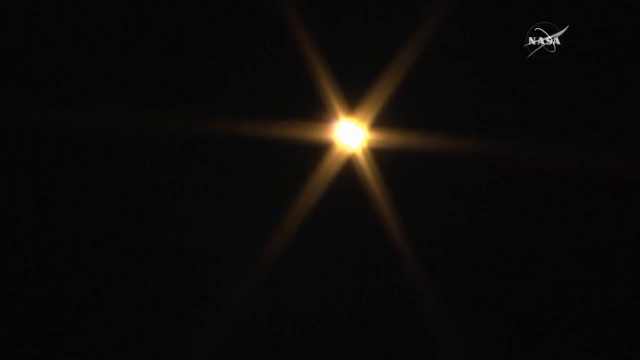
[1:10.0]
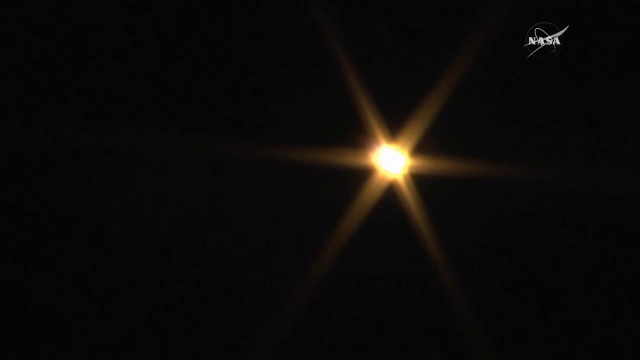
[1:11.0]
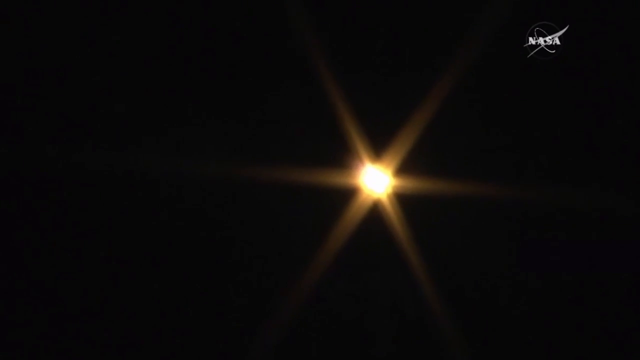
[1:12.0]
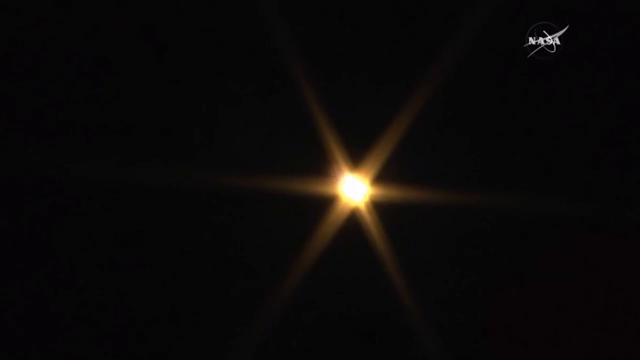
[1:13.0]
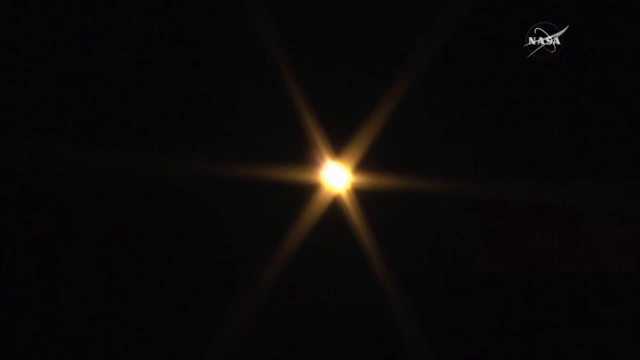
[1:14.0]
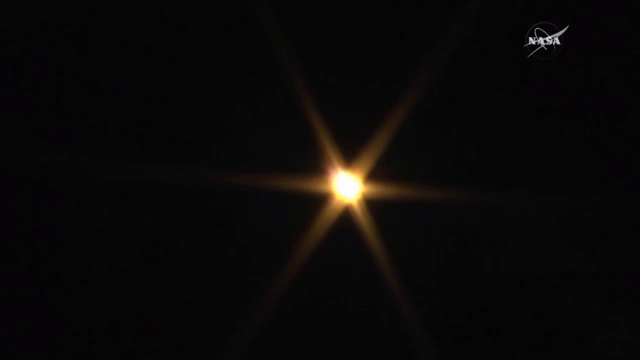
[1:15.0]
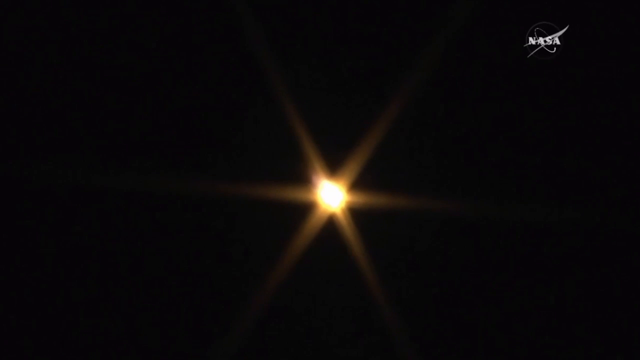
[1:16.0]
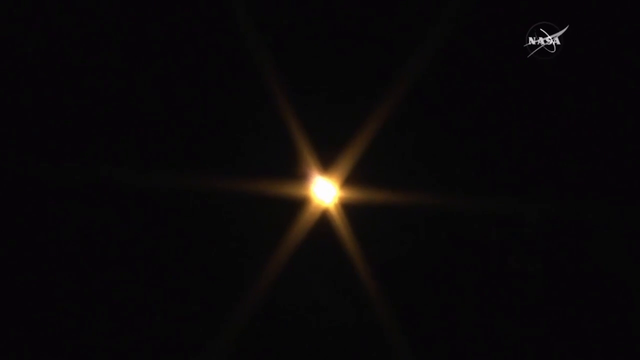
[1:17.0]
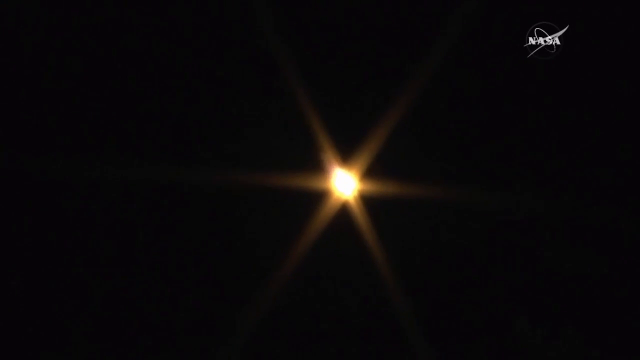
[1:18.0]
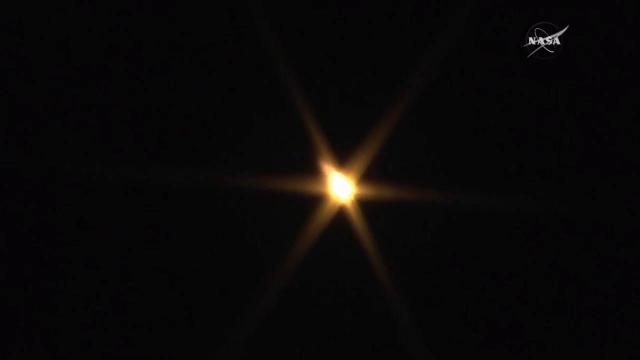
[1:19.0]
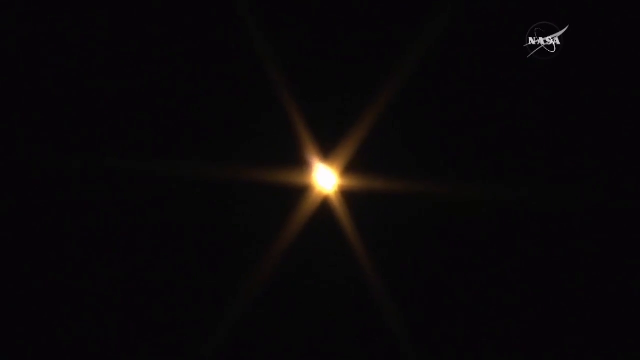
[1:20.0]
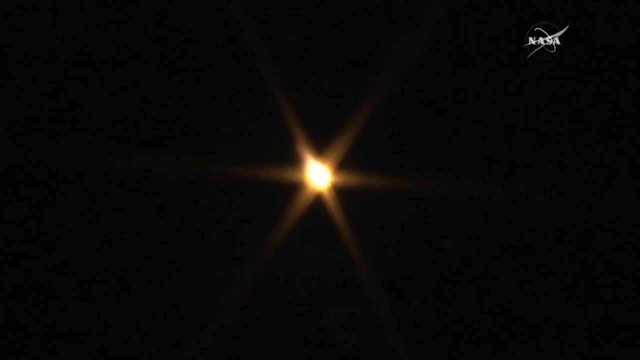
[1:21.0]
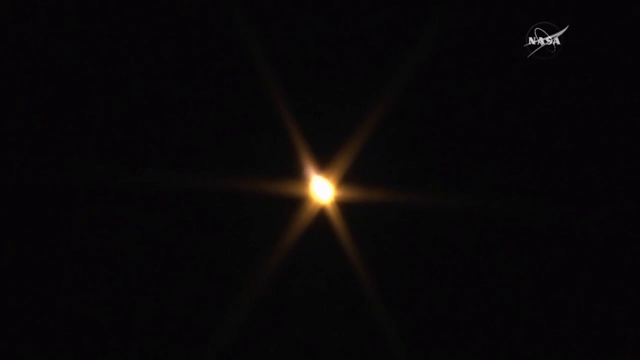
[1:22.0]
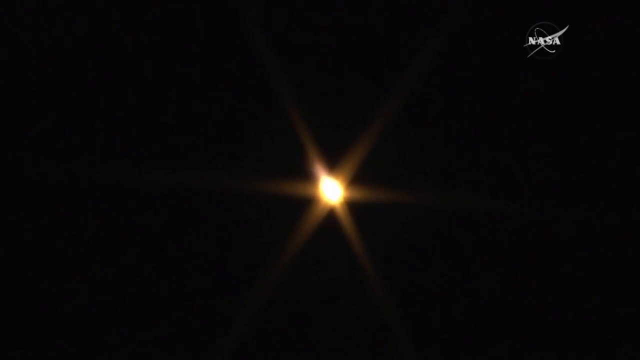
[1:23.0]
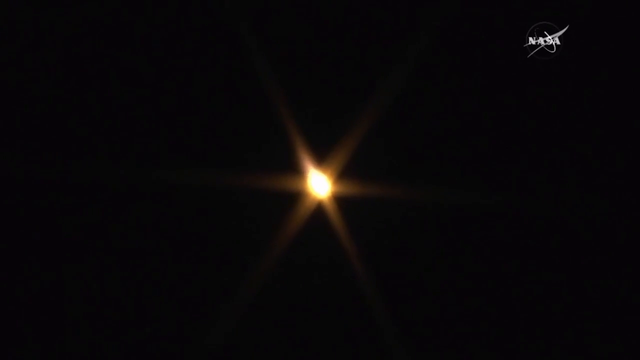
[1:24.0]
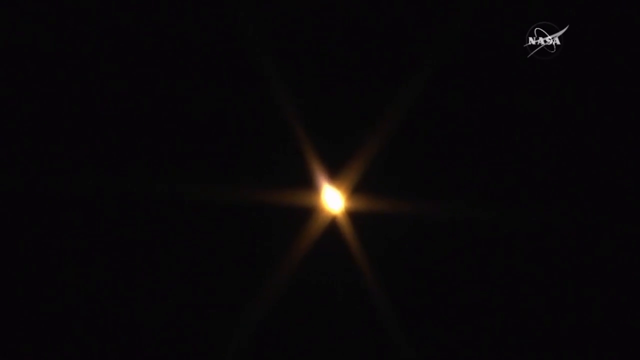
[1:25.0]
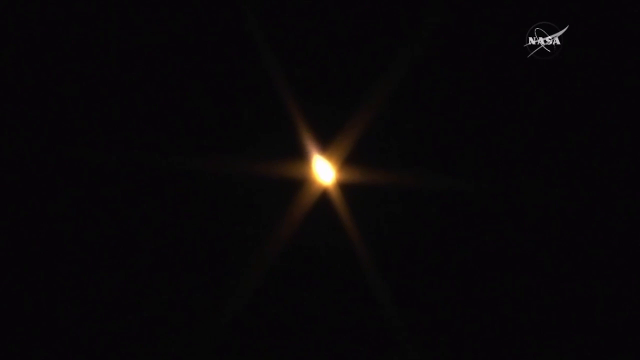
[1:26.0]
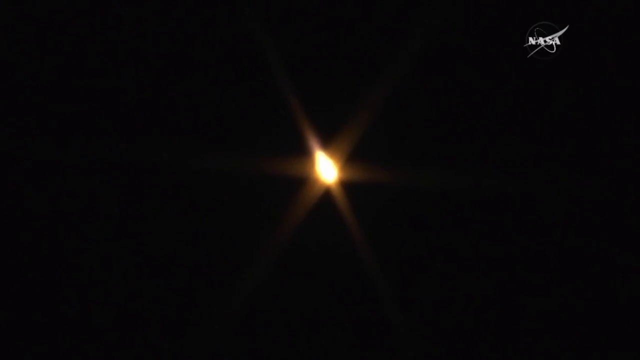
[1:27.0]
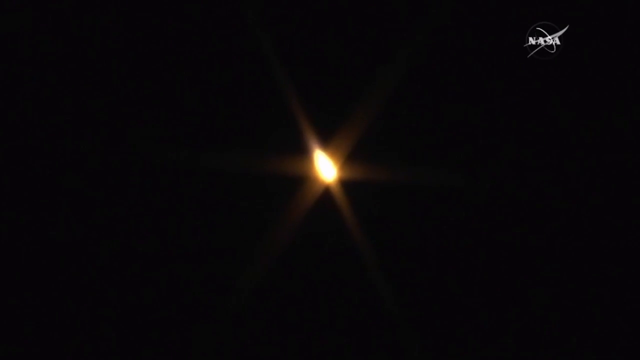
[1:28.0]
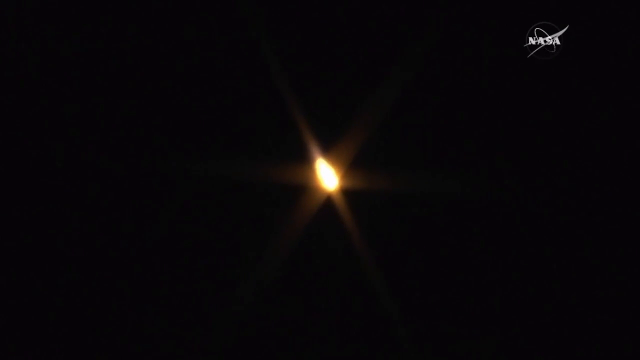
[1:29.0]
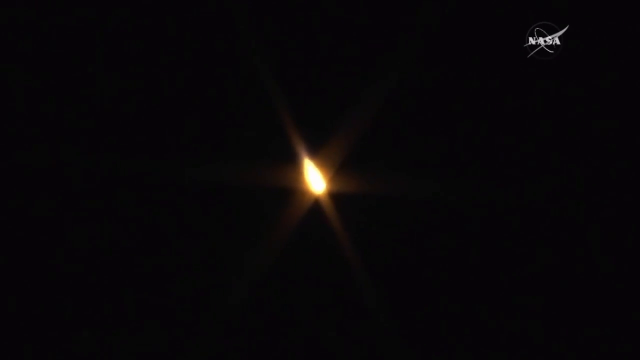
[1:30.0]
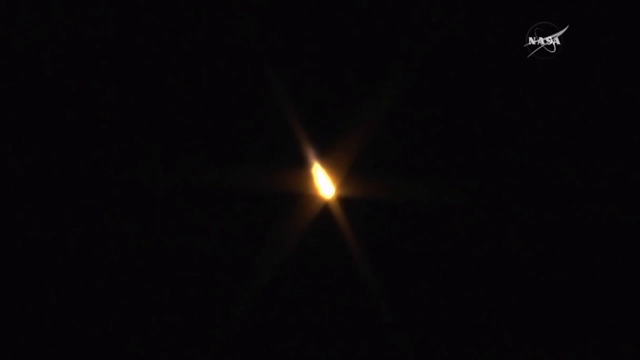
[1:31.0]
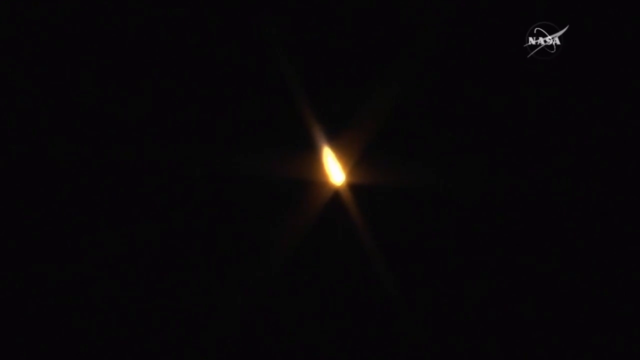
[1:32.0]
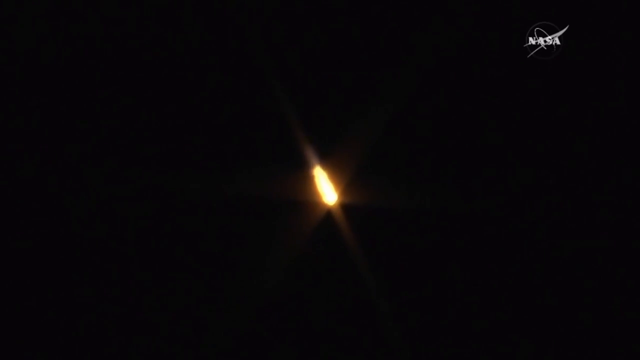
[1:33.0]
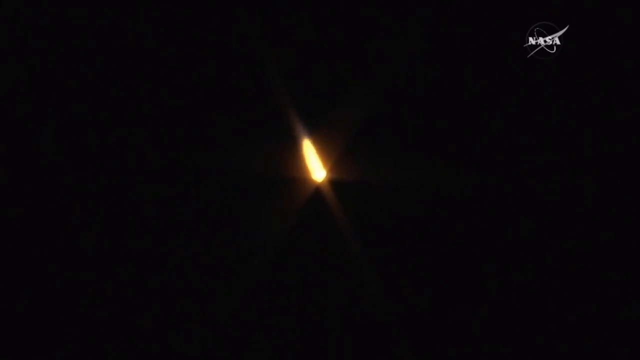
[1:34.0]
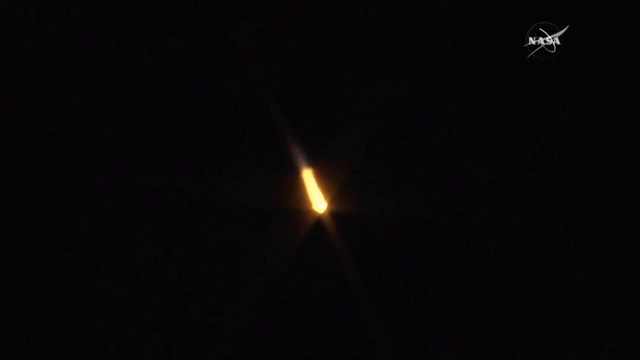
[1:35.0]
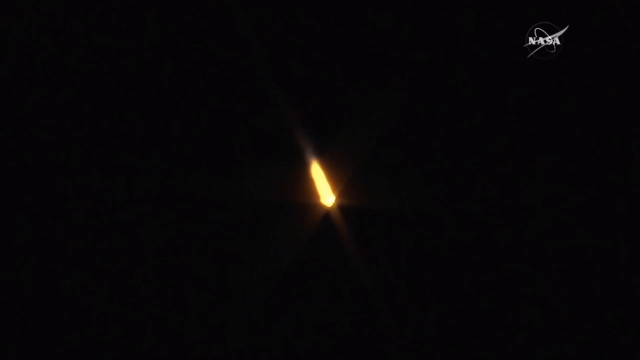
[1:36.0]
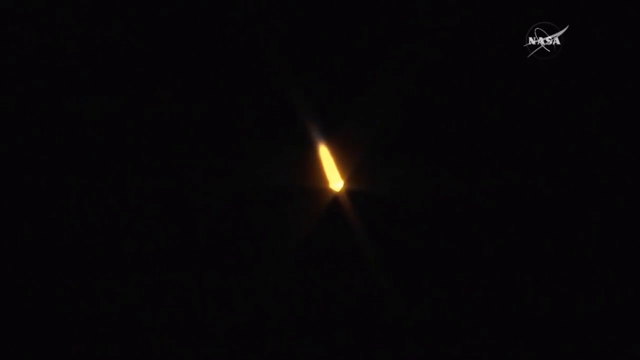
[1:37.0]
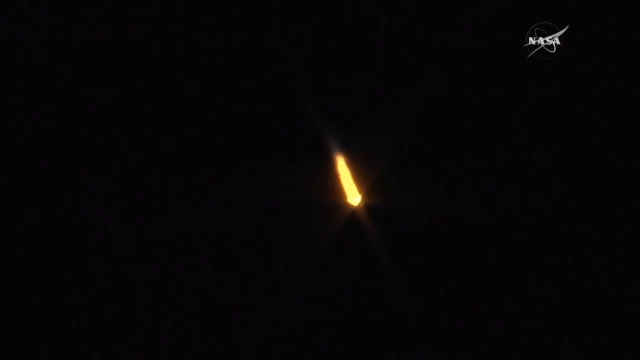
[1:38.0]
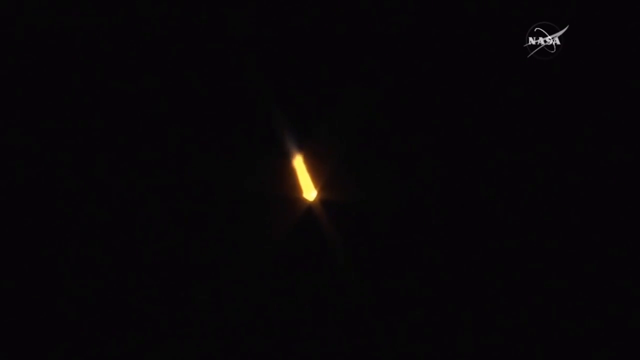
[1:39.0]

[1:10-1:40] A burning orange light that looks like a star goes up in the sky, growing dimmer the further it goes. It then appears to come back down, looking like a burning star descending very fast.